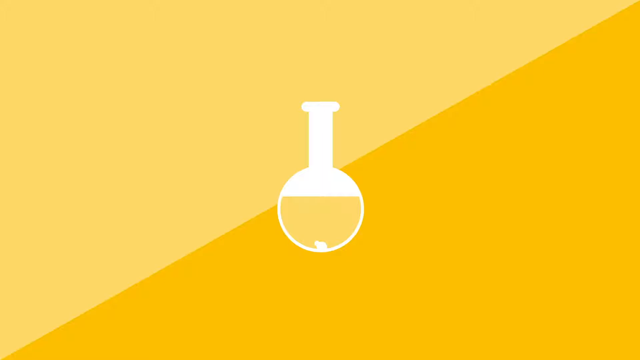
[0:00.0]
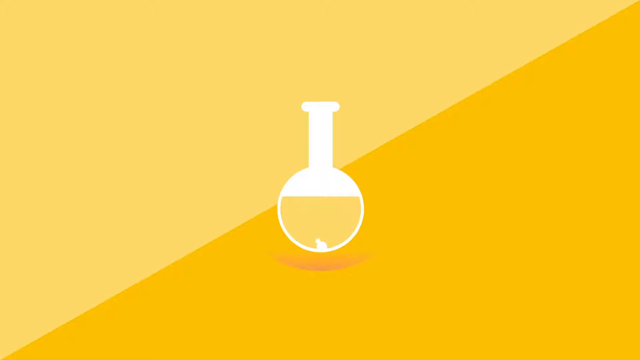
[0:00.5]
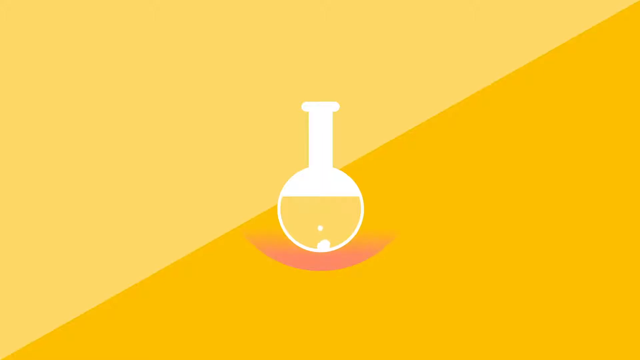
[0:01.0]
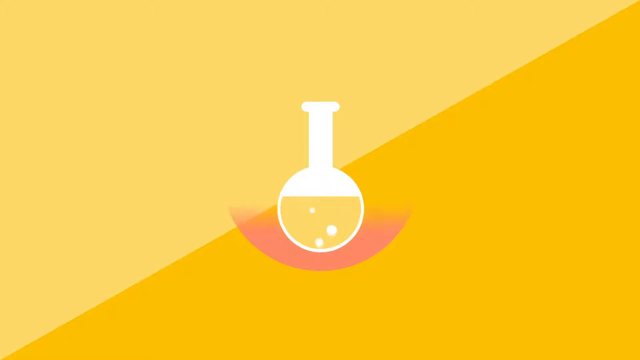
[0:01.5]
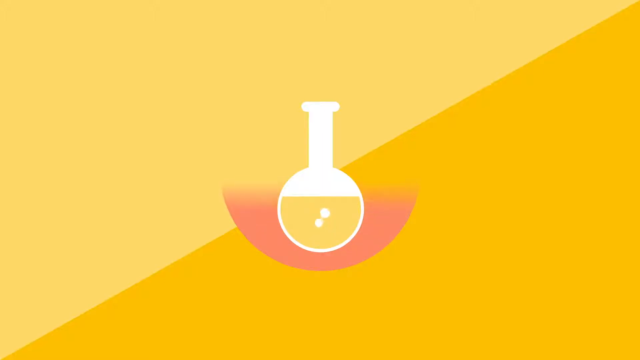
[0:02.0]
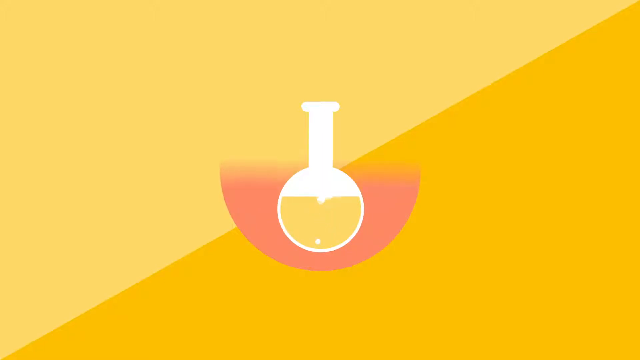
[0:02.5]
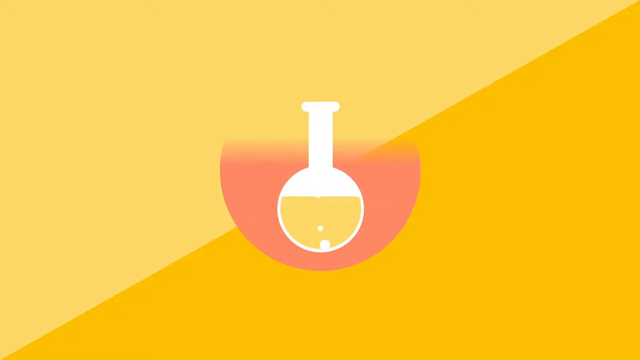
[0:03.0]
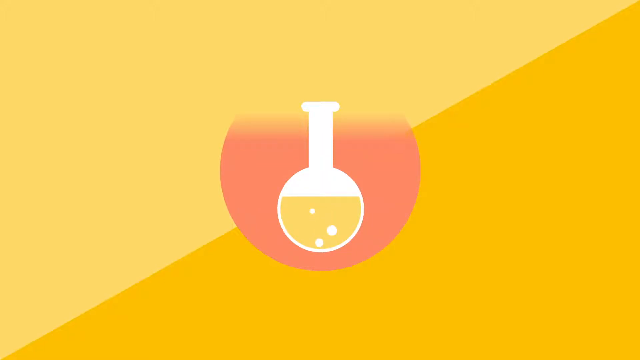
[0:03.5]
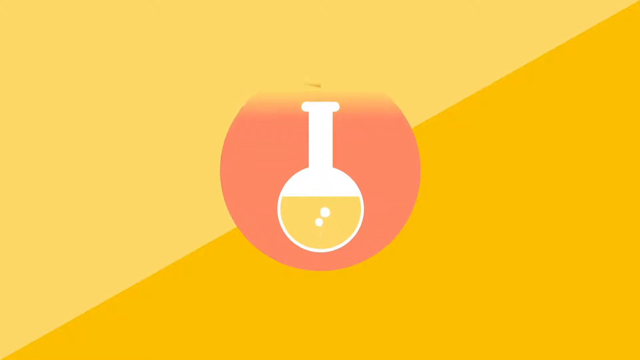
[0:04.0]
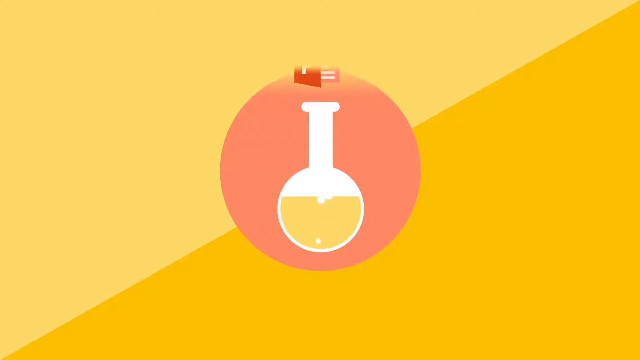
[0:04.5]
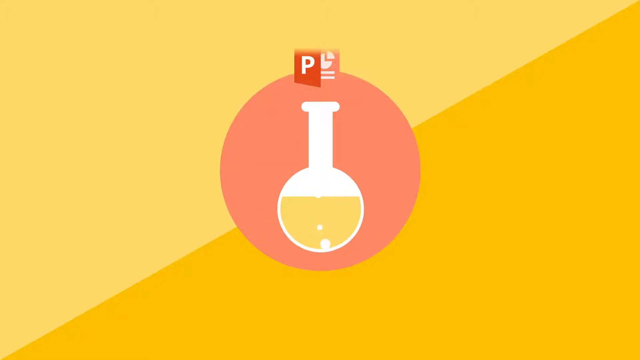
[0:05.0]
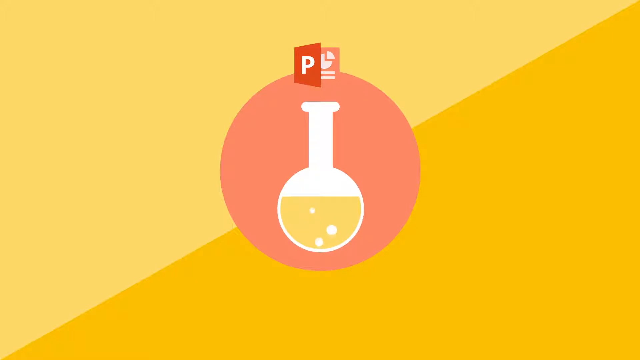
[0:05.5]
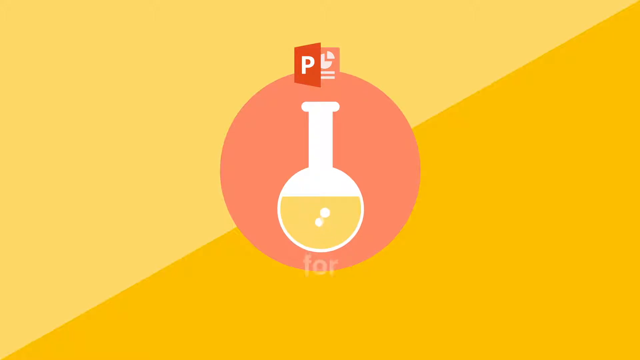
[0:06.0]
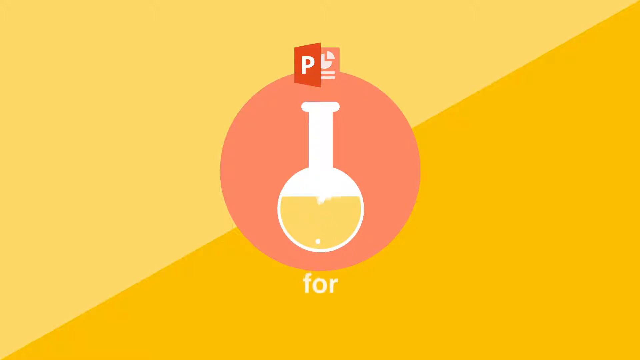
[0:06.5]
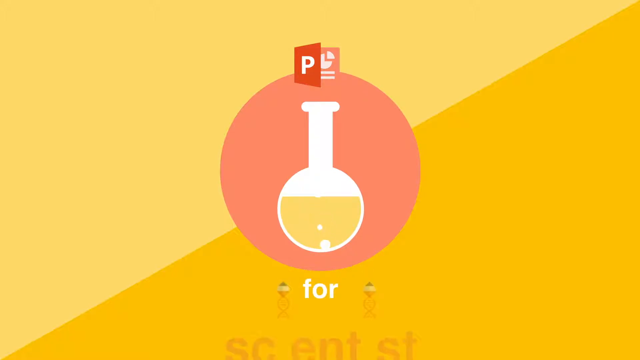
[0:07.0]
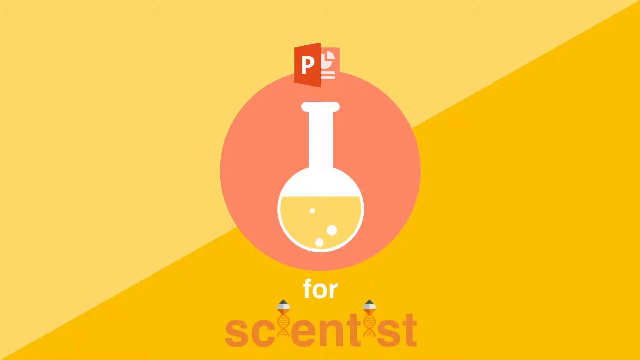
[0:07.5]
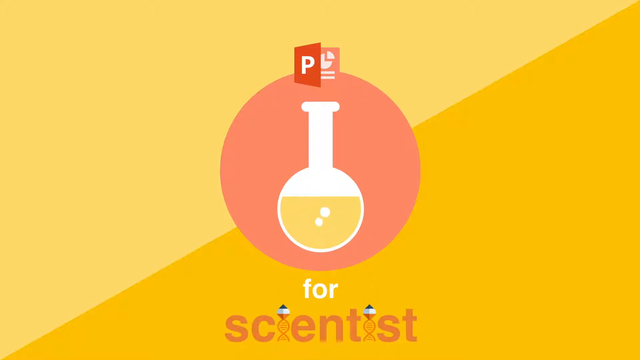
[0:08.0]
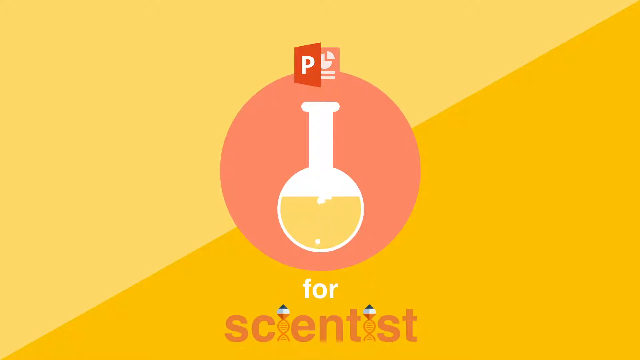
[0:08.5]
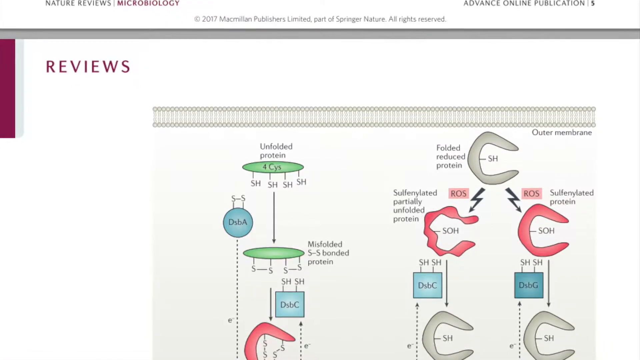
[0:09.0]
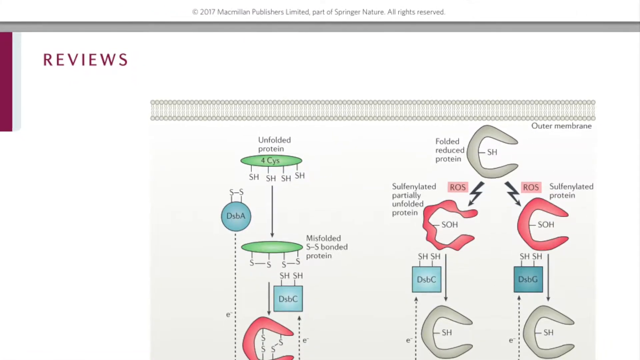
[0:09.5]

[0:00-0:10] The video opens on a diagonal split screen: the top portion is pale yellow and the bottom portion is bright golden yellow, each section shaped like a triangle. In the middle of the screen is a drawing of a glass beaker that appears to be filled three quarters of the way with a yellow substance. The substance bubbles, with some air bubbles rising from the bottom of the beaker, so it appears to be a yellow liquid. Meanwhile, a pink aura comes up from the bottom of the screen and forms a pink circle around the beaker. At the top of the circle there is a square that looks like the front cover of a book opening; the front cover is red with a white P on it, and it looks like the back cover of the book is visible, as if the front cover is open. Next, the words "for scientists" appear on the screen. Finally, the screen changes and "reviews" appears in the upper left corner.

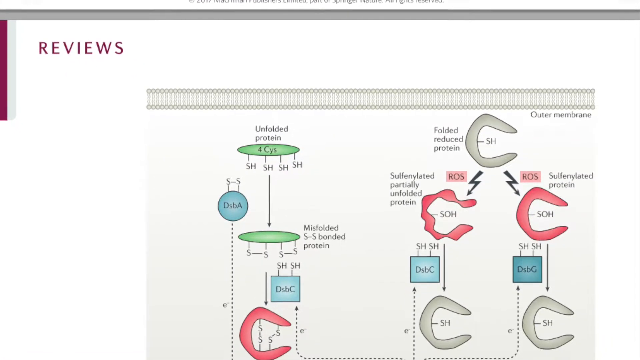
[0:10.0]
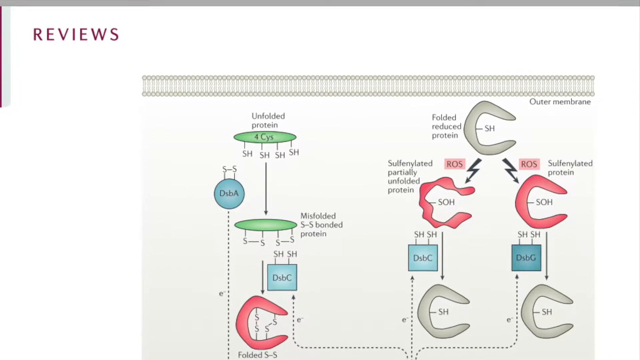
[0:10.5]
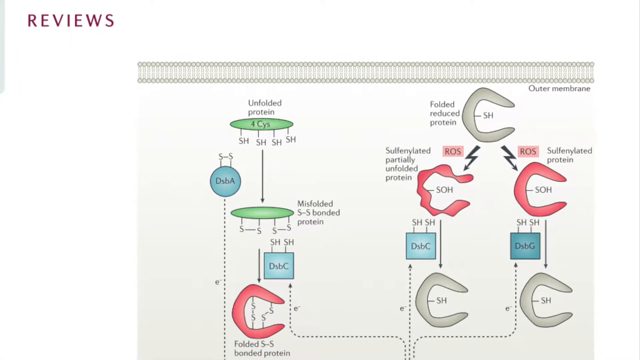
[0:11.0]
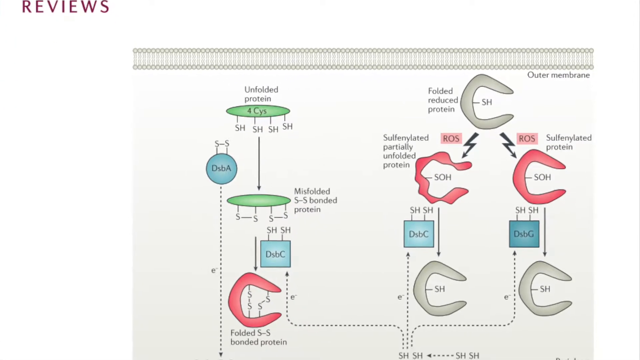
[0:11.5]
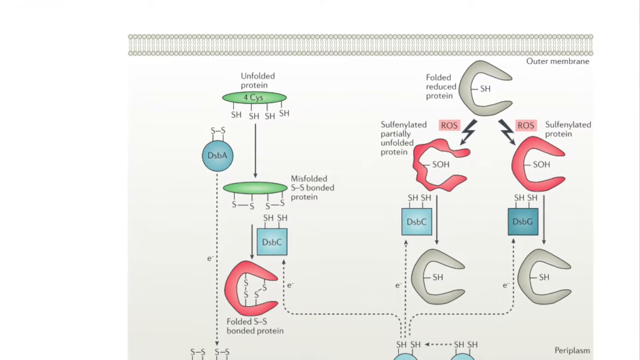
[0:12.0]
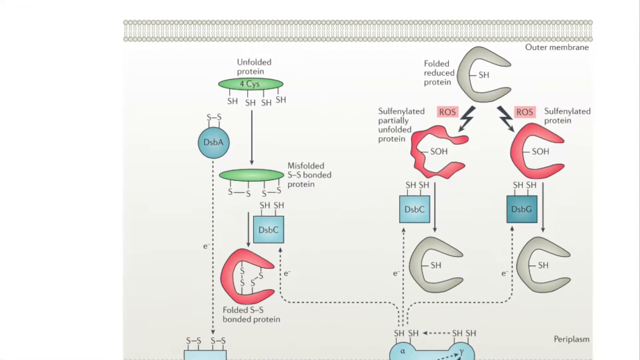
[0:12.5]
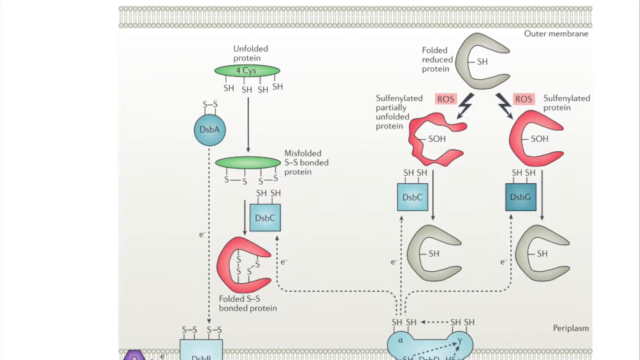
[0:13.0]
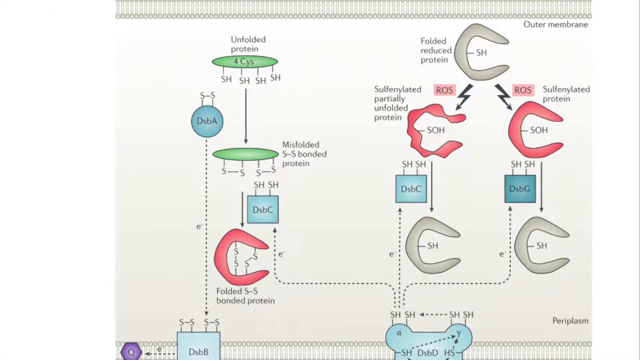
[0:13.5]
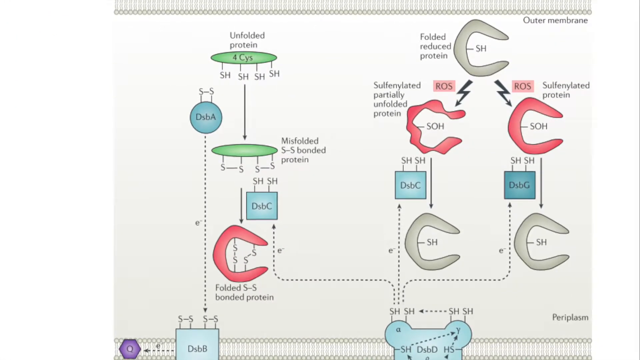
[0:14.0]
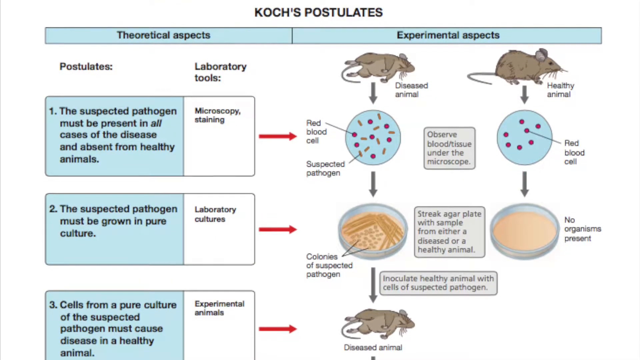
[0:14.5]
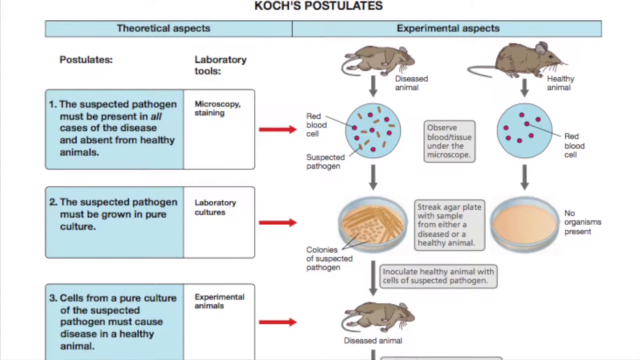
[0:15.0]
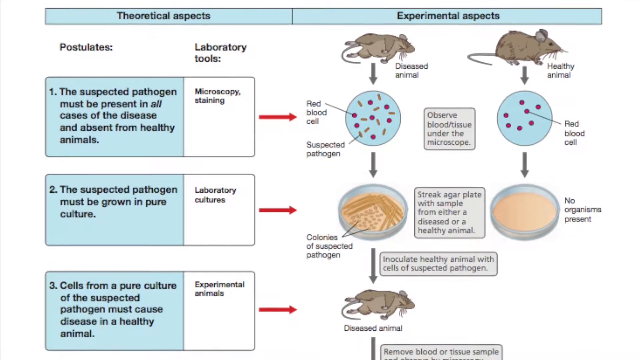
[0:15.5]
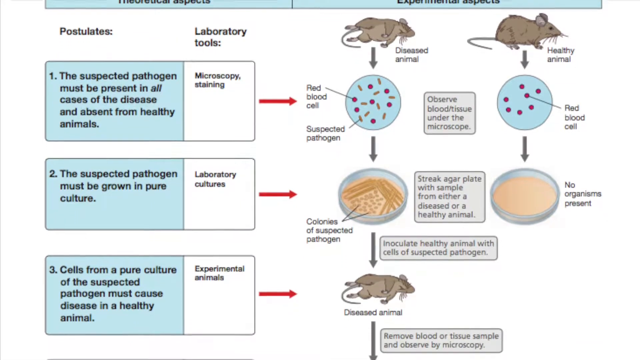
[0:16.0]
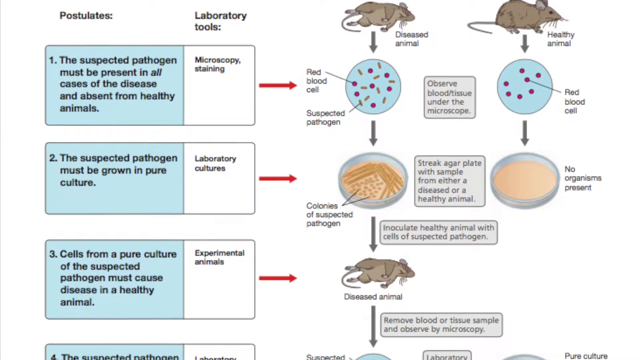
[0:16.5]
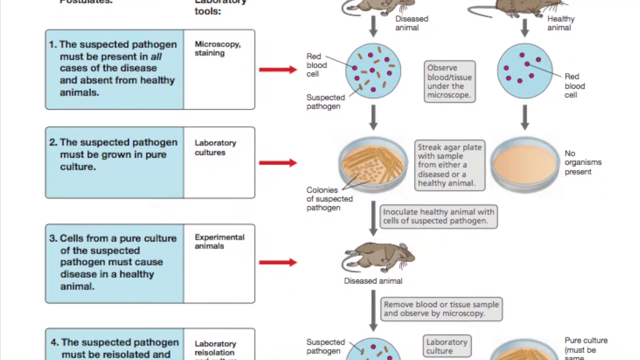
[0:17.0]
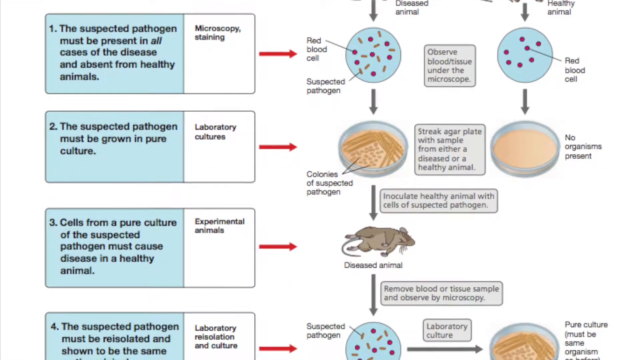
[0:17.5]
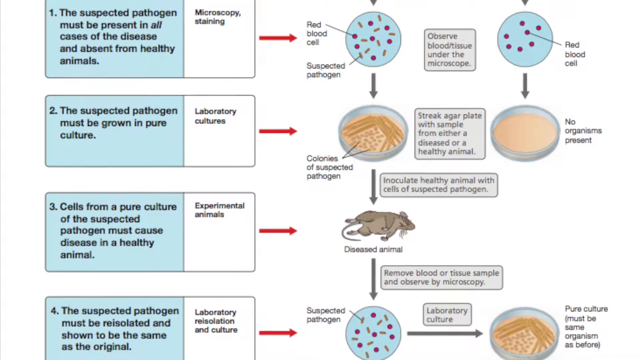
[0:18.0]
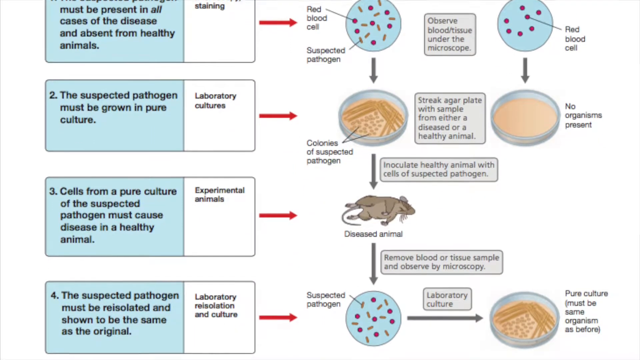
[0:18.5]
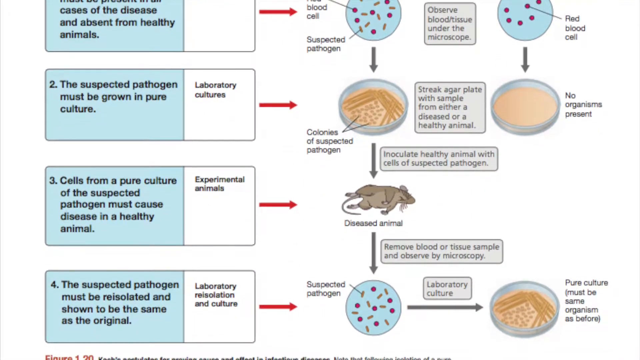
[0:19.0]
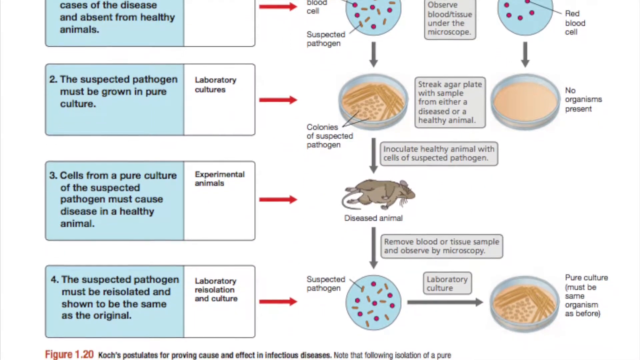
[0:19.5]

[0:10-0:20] A white screen appears that looks like a computer screen, though most of it cannot be seen. "Reviews" is written in burgundy letters in the upper left corner. Two bars run down the left side of the upper screen, about a quarter of the screen: one is burgundy and the one next to it is gray. The page scrolls down and a chart appears. The chart is about an outer membrane, as "outer membrane" appears in the upper right corner. On the left side are the words "unfolded protein". Beneath this is a purple oval containing the words "for CYS". Four lines are attached to the oval, coming down from its bottom, and each line is tagged with the letters S-H.